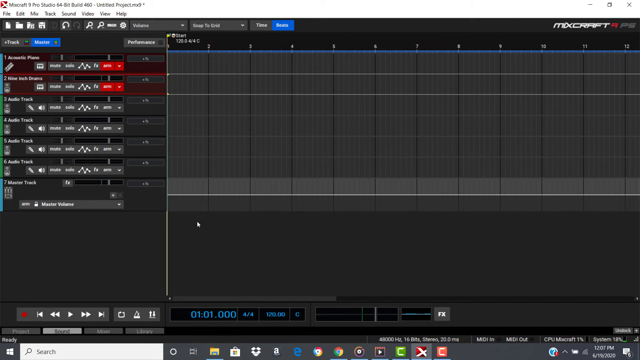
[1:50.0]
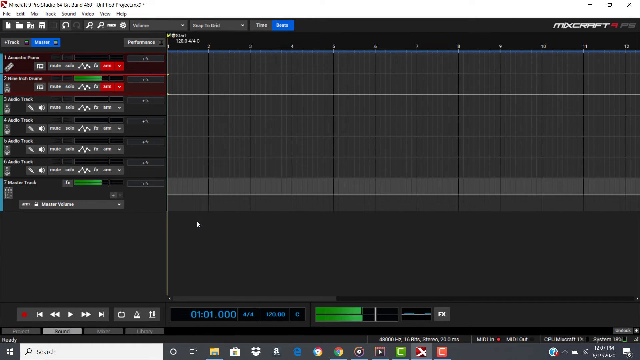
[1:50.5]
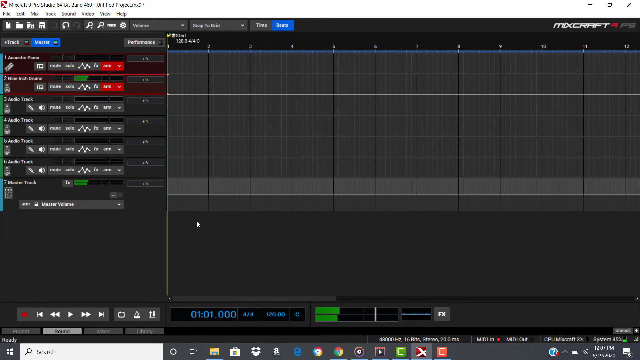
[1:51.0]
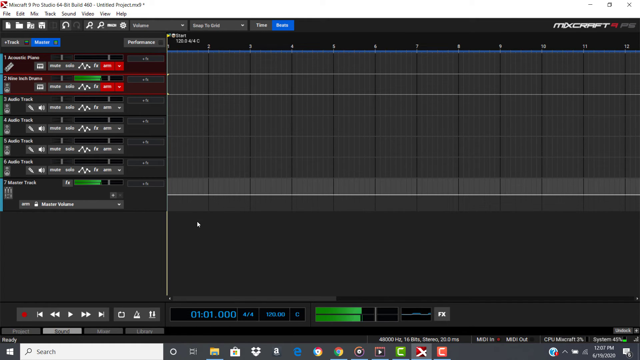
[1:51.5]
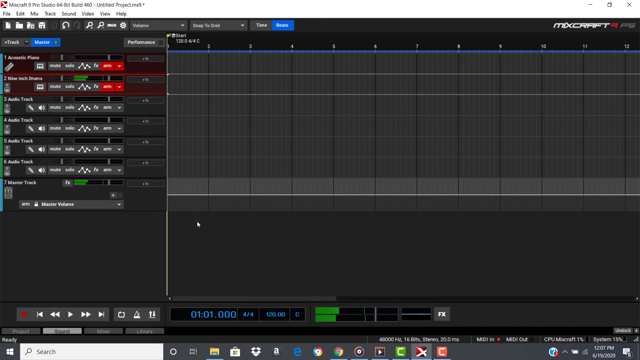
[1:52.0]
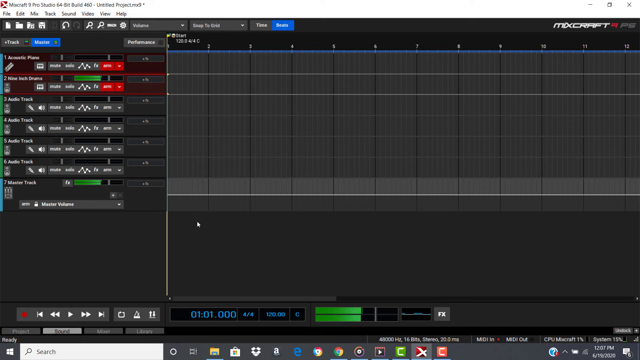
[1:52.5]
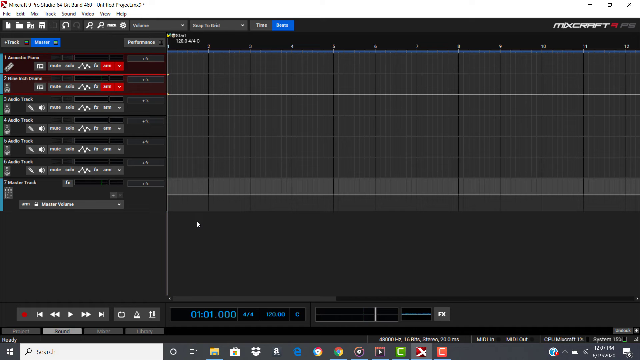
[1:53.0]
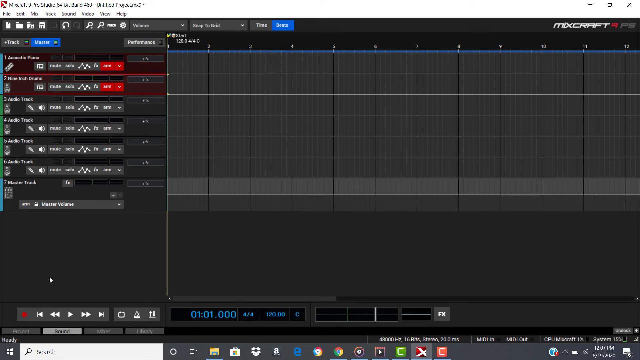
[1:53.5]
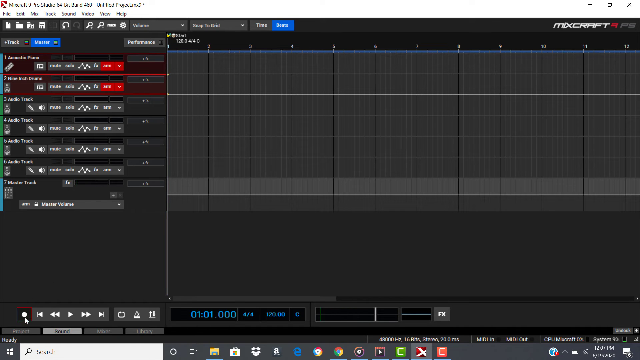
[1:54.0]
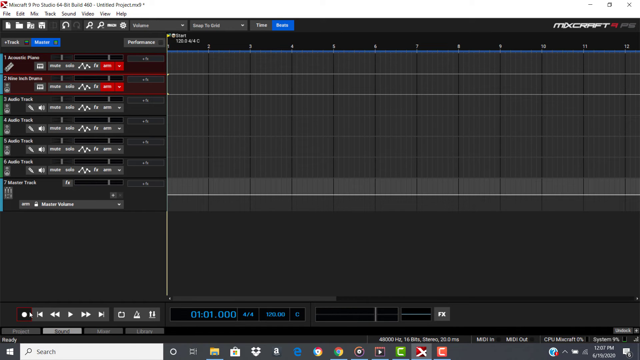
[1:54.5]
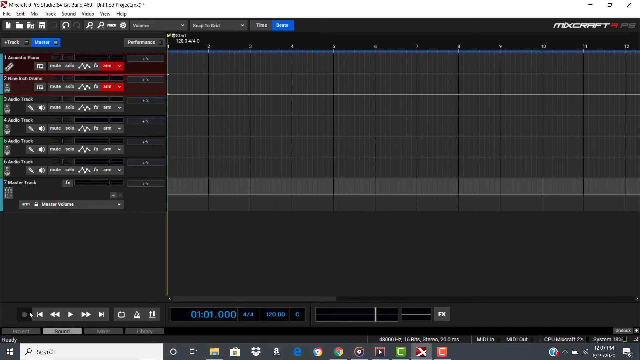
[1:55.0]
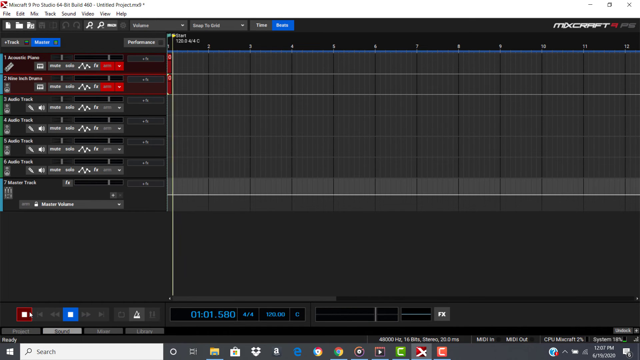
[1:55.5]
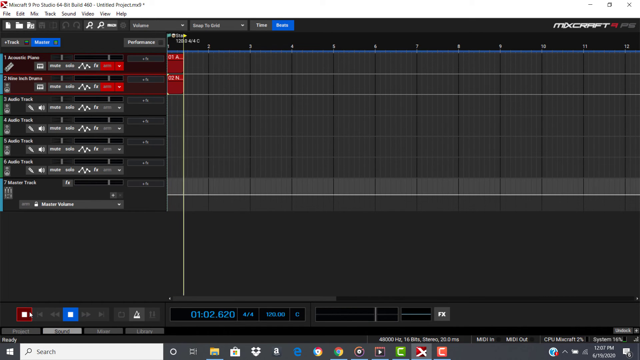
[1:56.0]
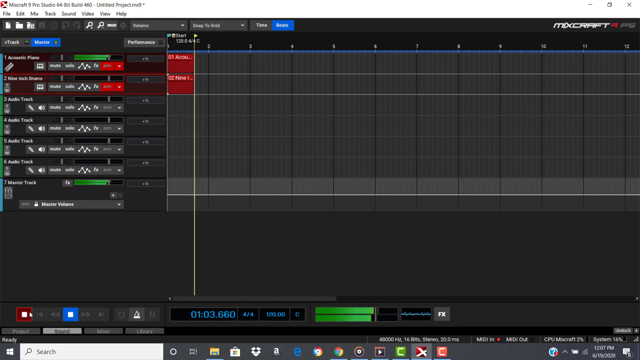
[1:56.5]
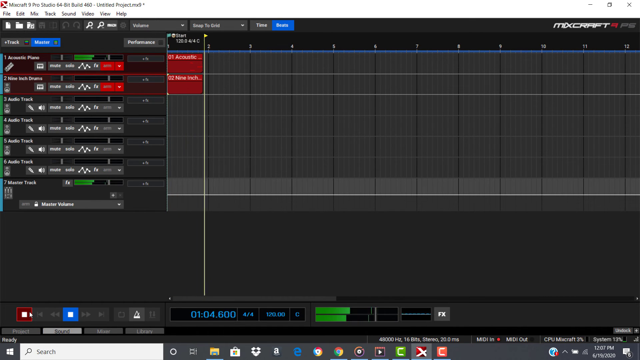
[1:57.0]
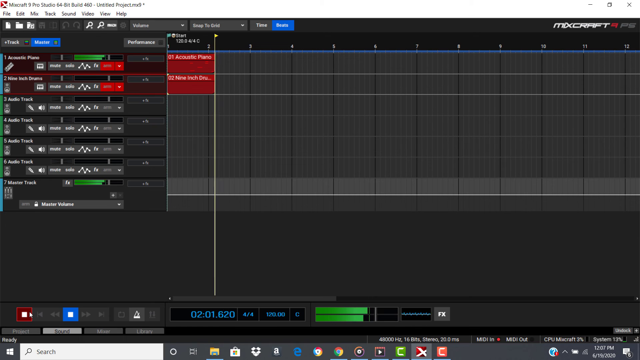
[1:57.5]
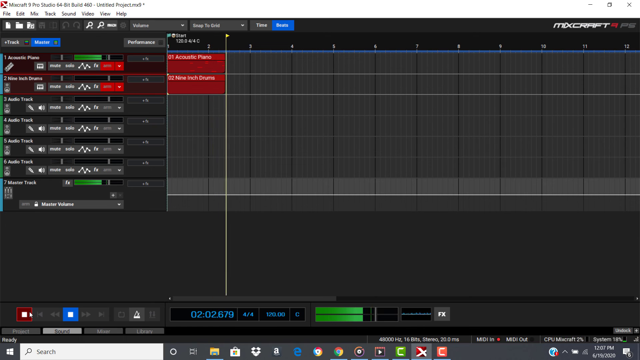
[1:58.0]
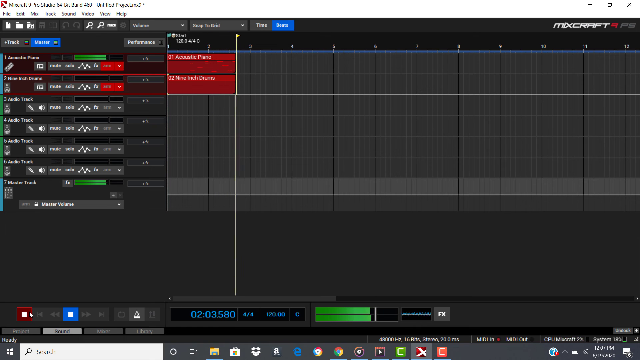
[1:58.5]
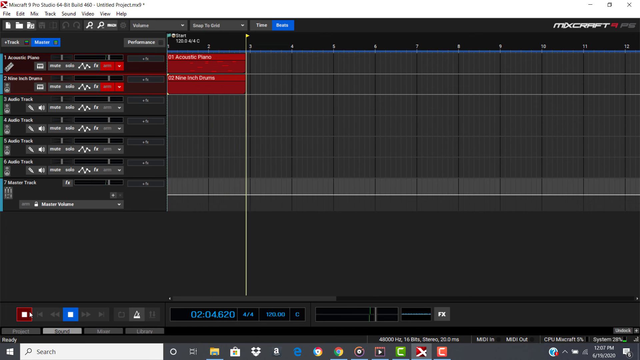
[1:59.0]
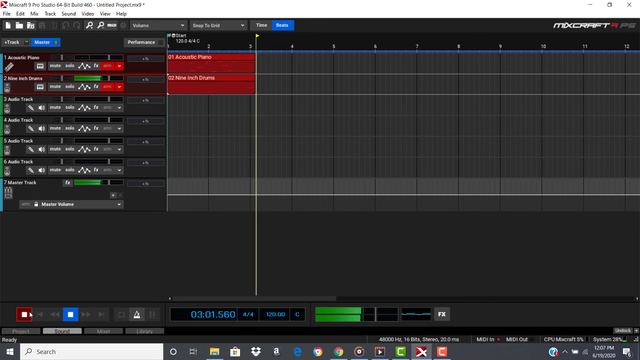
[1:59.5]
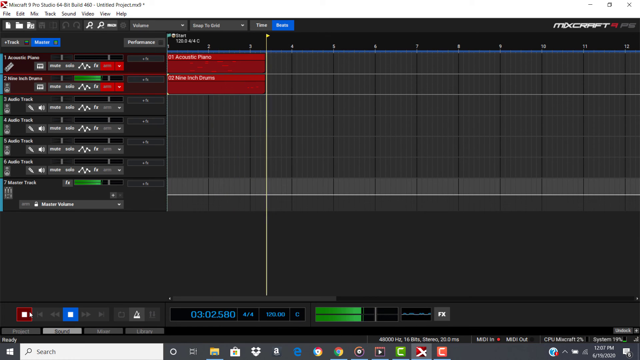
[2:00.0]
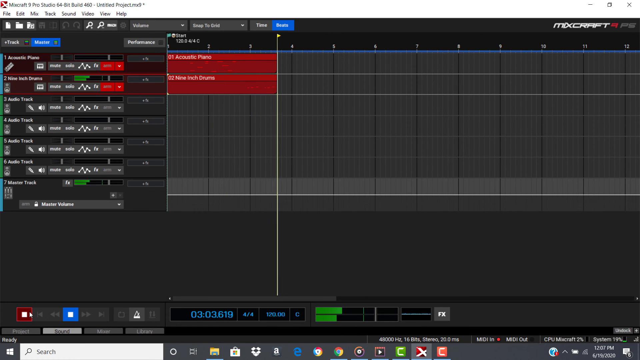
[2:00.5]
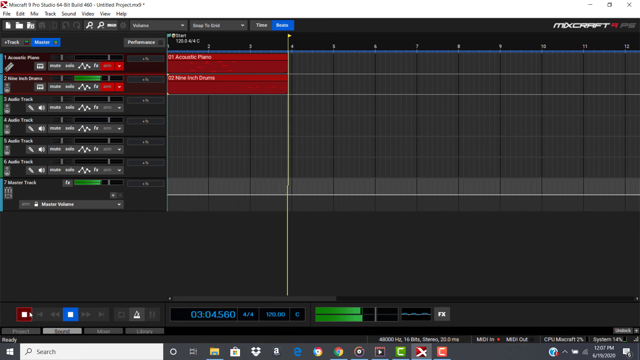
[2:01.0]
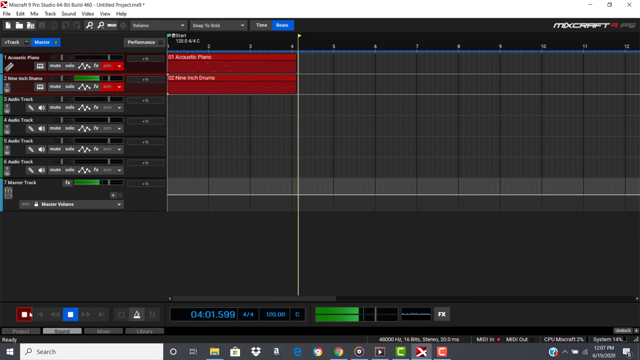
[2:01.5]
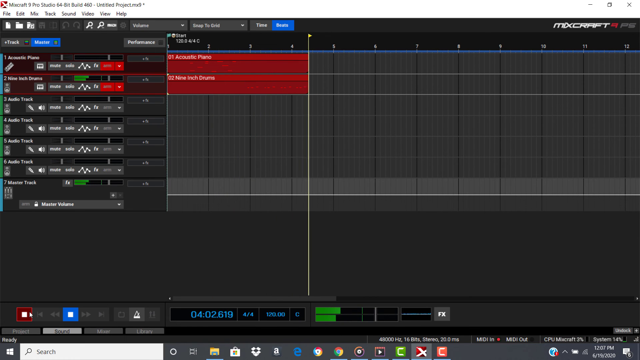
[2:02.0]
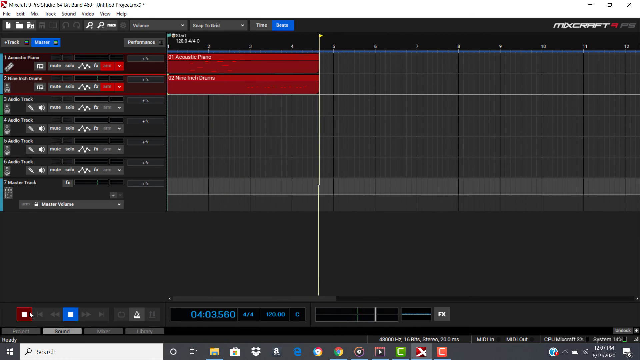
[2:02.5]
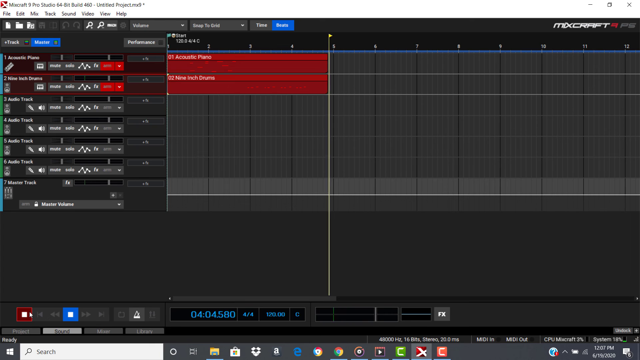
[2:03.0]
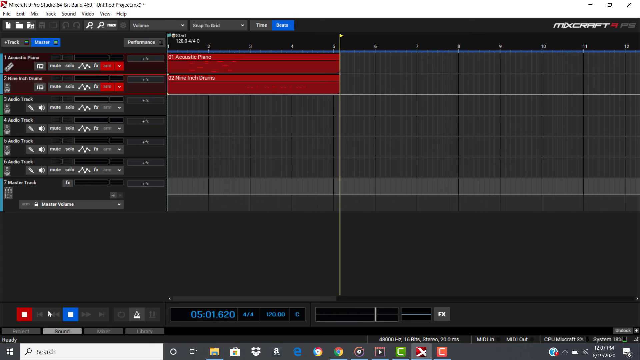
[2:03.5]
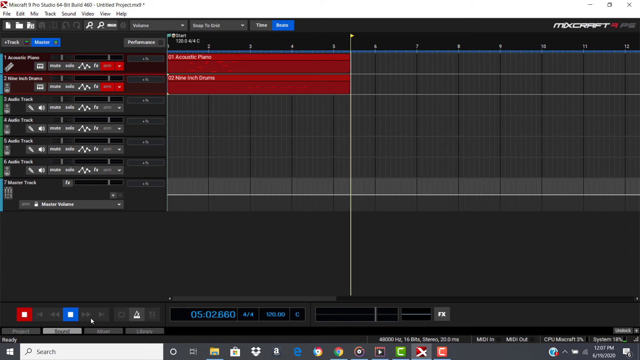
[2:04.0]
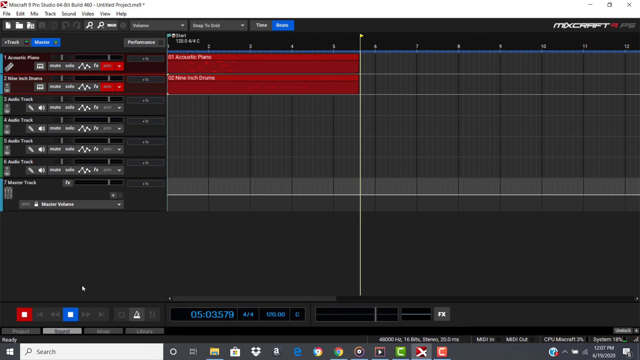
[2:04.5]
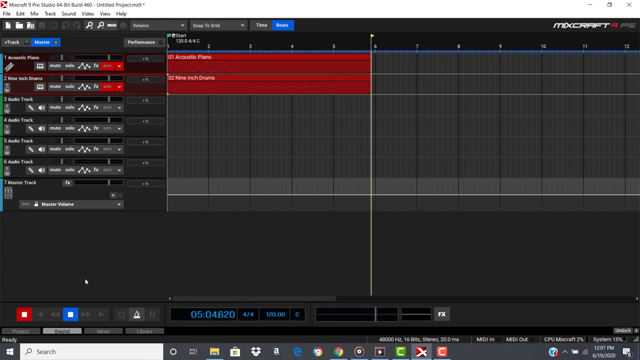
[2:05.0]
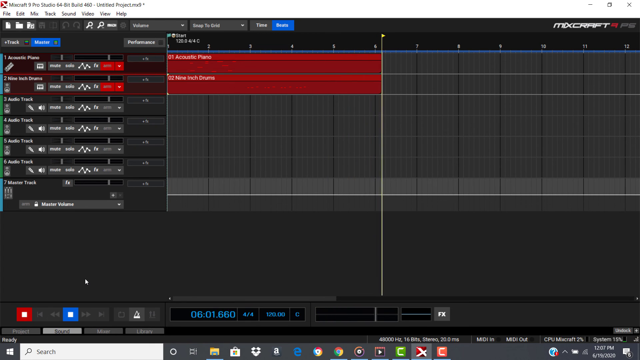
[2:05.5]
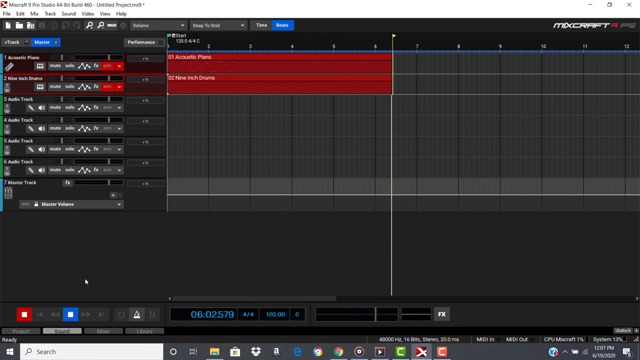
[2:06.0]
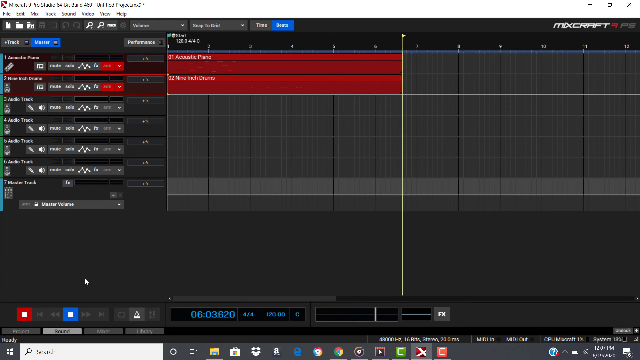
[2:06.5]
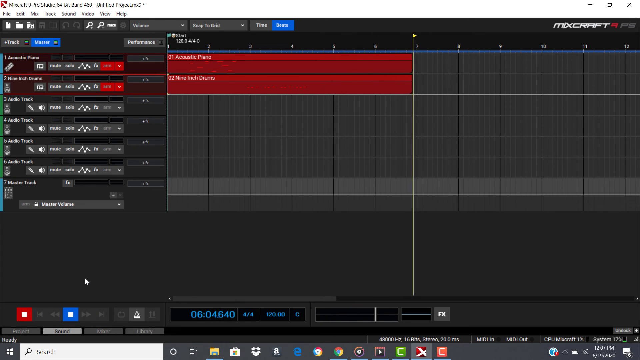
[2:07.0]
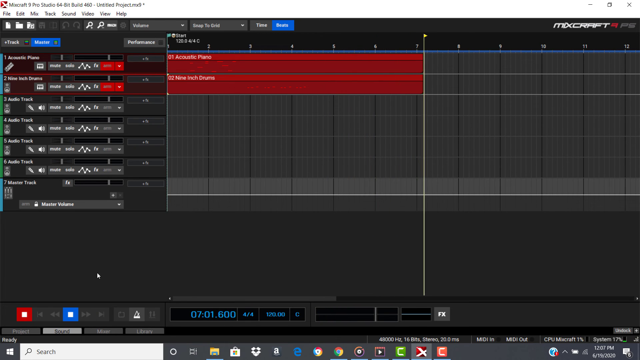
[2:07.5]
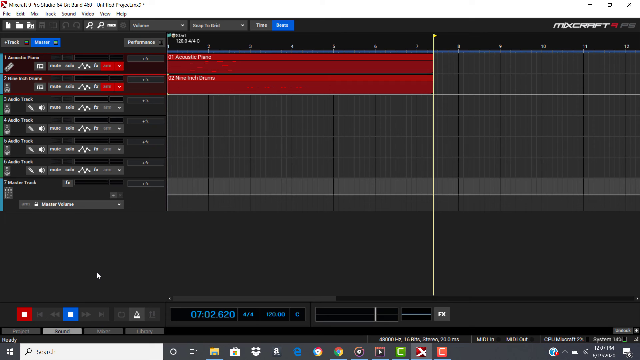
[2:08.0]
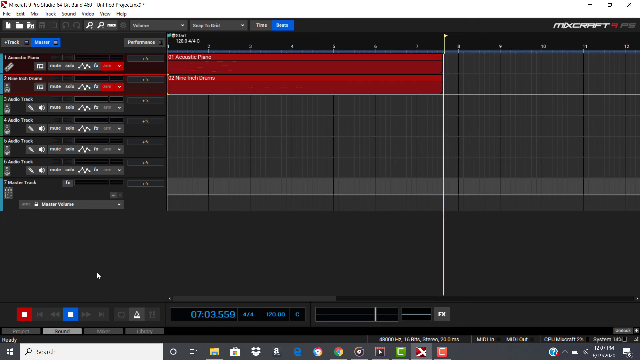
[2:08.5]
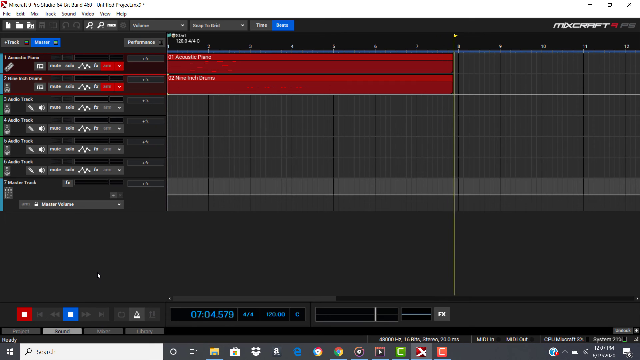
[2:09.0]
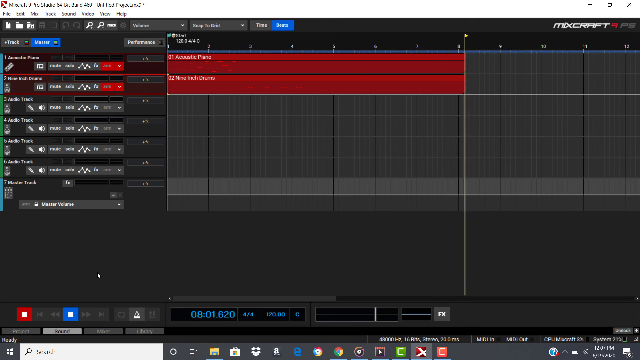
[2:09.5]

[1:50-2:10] Someone's computer screen shows the software Mixcraft open. It is very gray with black and has two sections: the left side has vertical columns one through seven, each labeled with little horizontal icons, and the right side has at least a dozen vertical columns. The mouse cursor, a small arrow like a little triangle with a stick coming out the bottom, moves from the center to the left. Little horizontal green animation bars kind of pulse to the right and back to the left repeatedly. As they pulse, a vertical white line moves across the 12 columns from left to right.